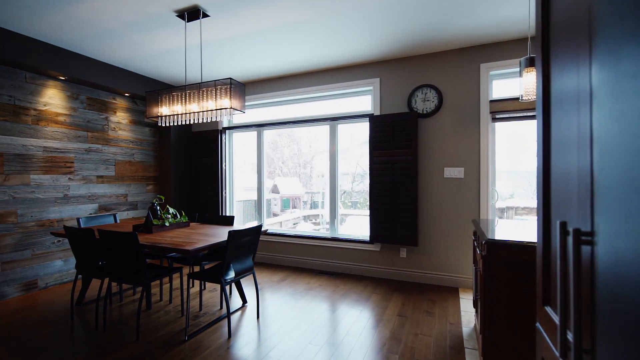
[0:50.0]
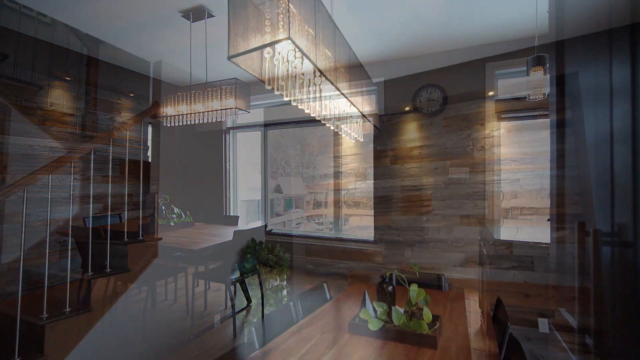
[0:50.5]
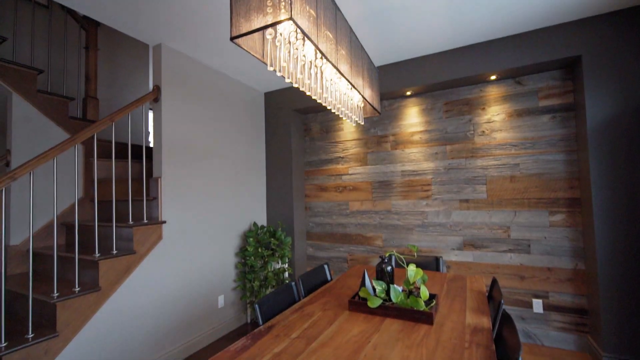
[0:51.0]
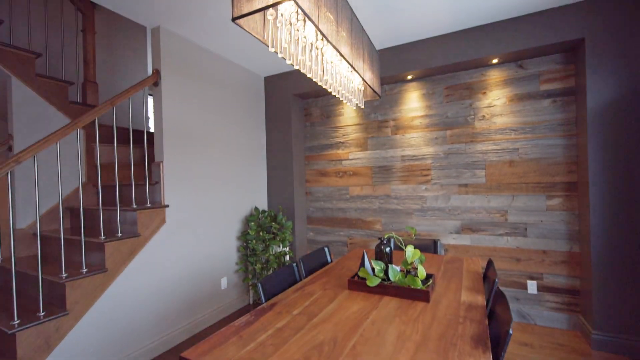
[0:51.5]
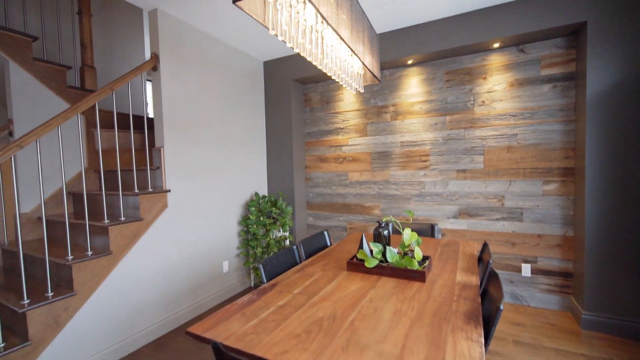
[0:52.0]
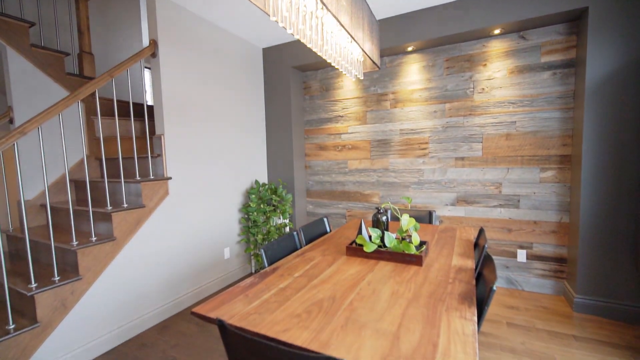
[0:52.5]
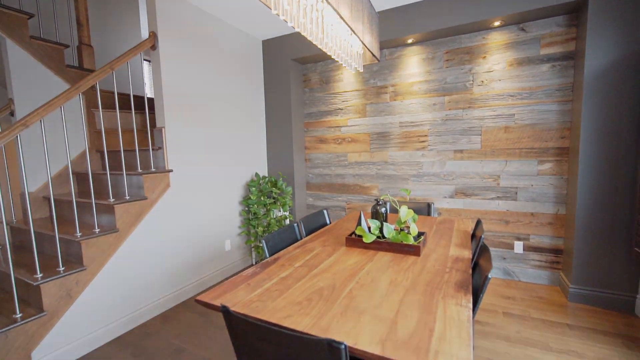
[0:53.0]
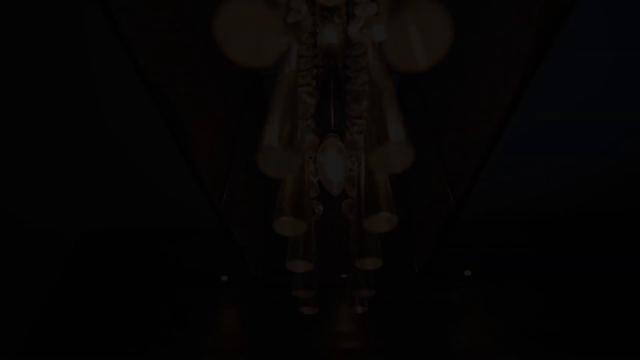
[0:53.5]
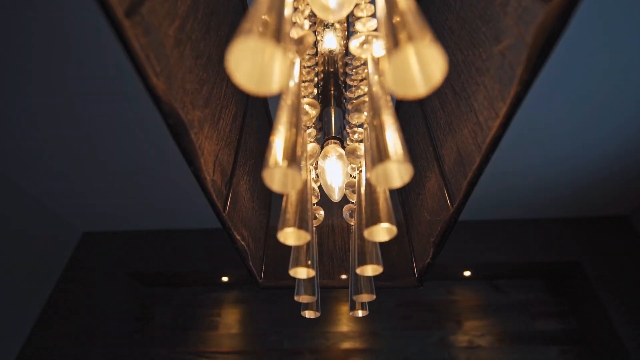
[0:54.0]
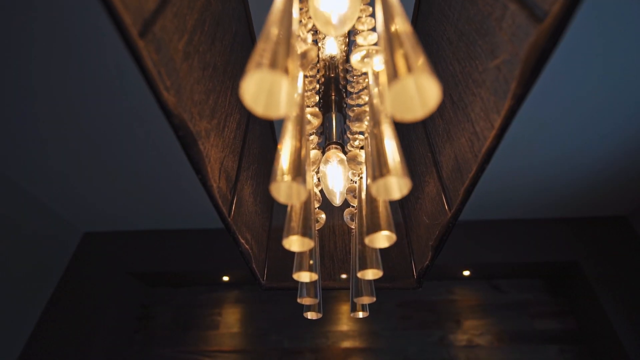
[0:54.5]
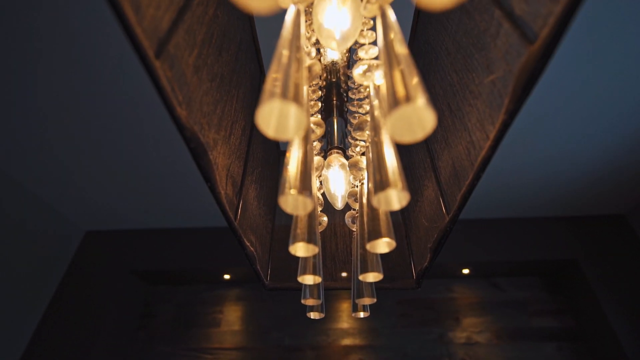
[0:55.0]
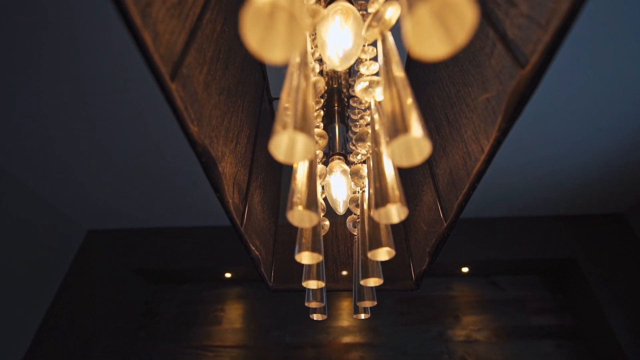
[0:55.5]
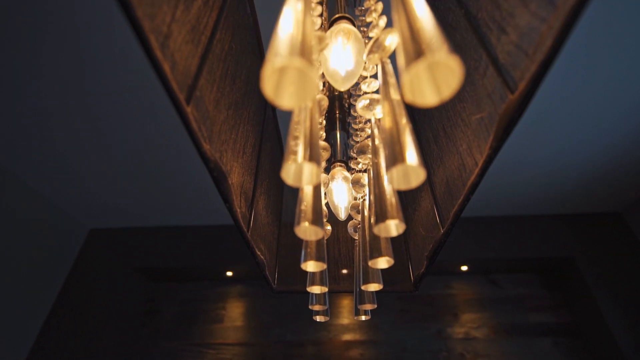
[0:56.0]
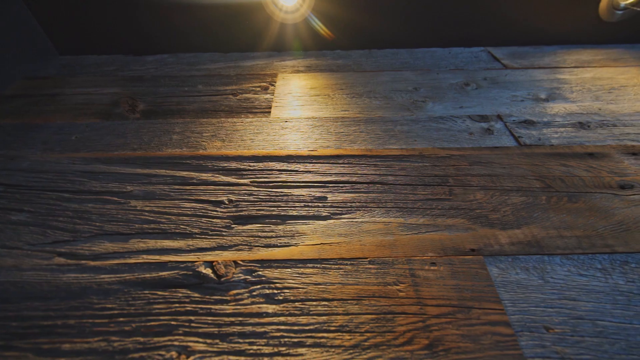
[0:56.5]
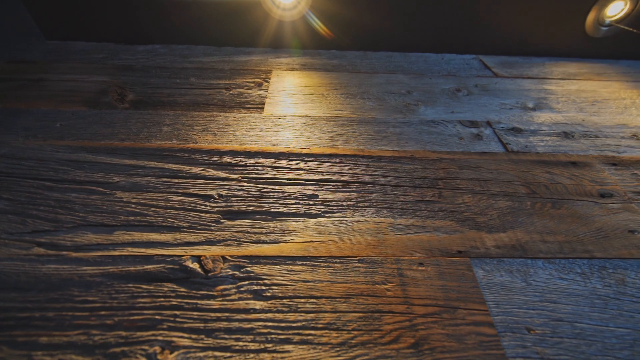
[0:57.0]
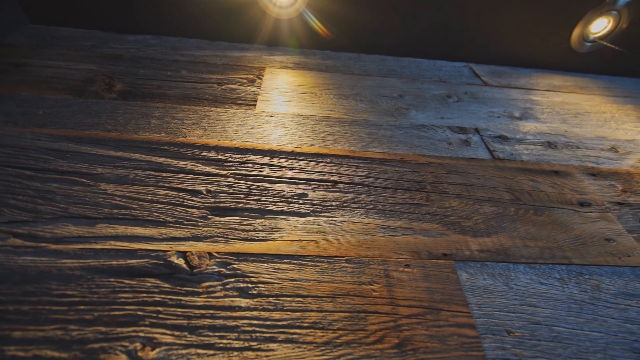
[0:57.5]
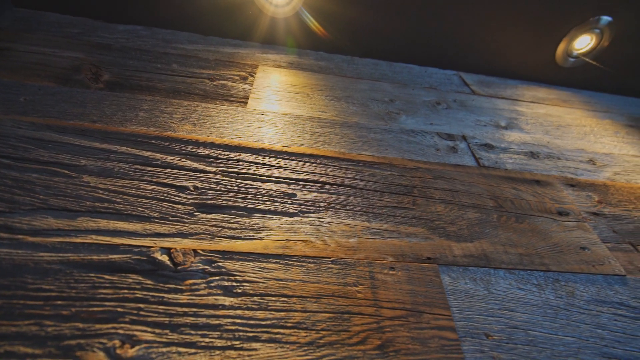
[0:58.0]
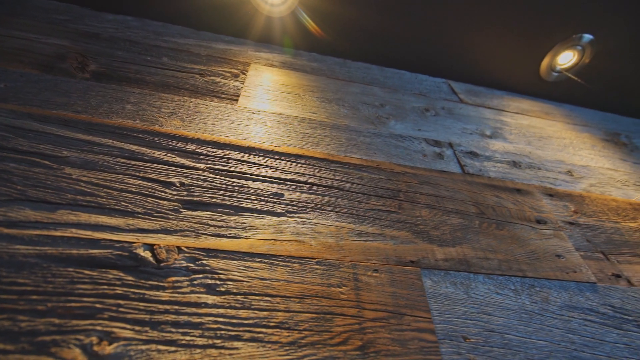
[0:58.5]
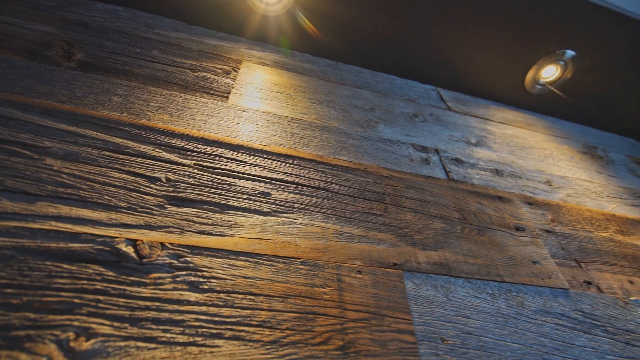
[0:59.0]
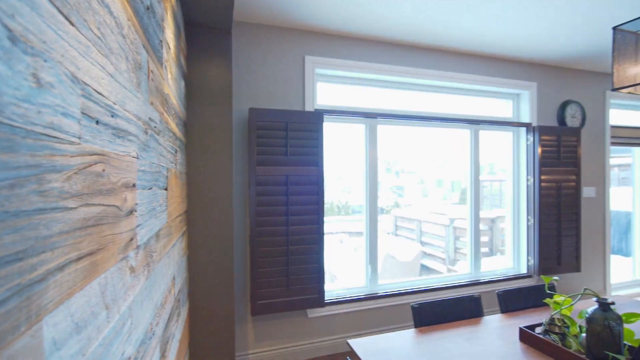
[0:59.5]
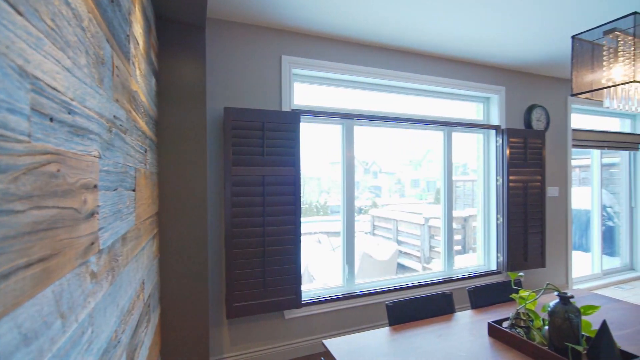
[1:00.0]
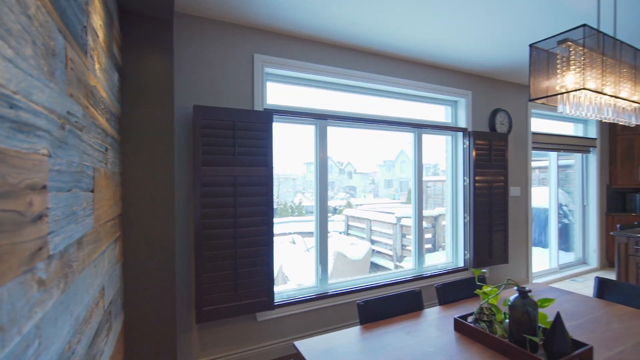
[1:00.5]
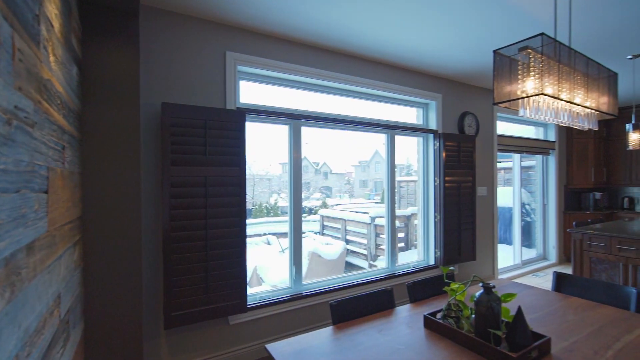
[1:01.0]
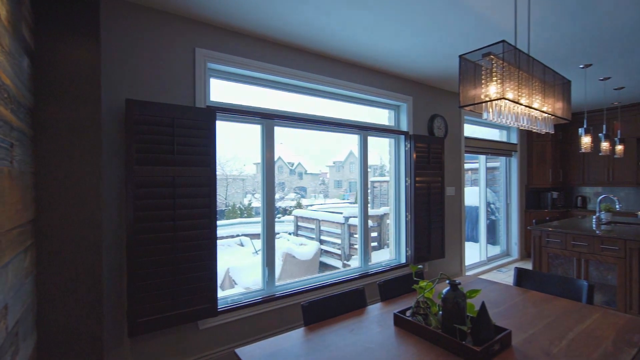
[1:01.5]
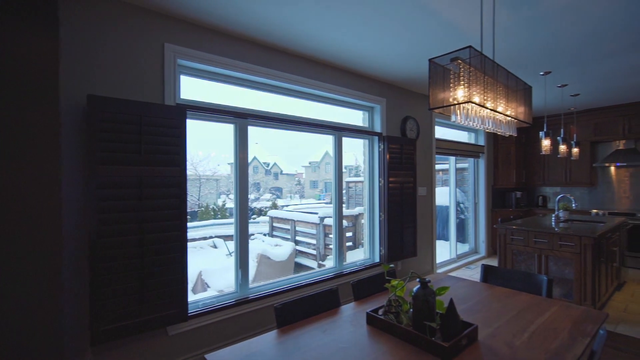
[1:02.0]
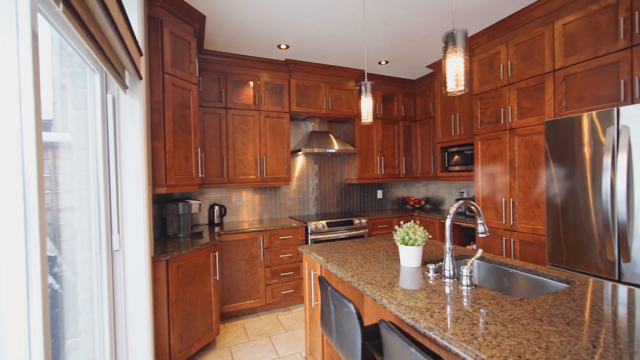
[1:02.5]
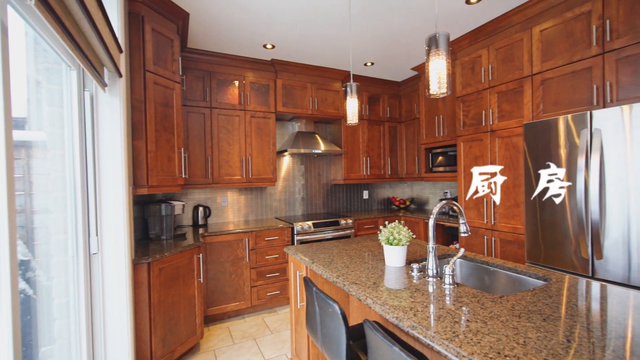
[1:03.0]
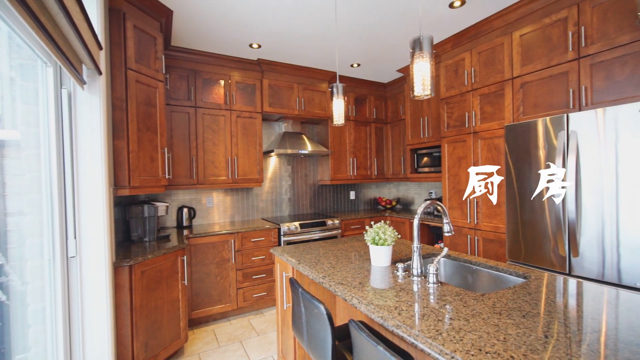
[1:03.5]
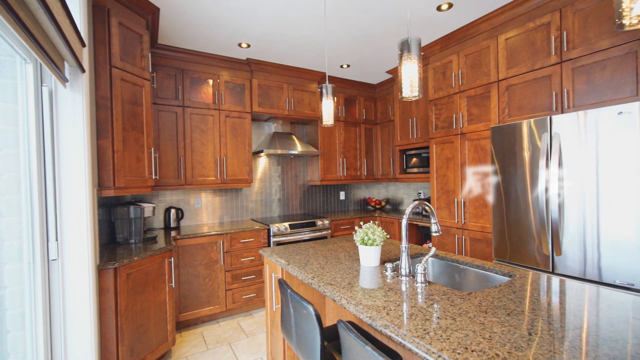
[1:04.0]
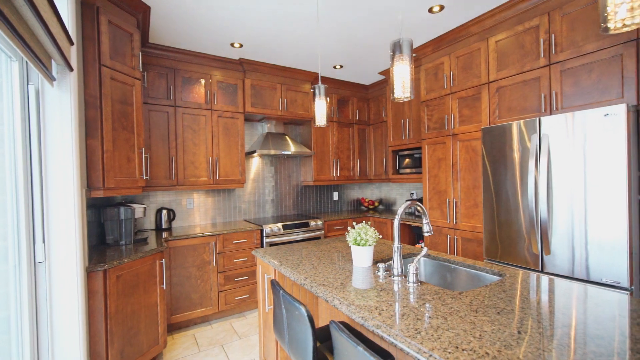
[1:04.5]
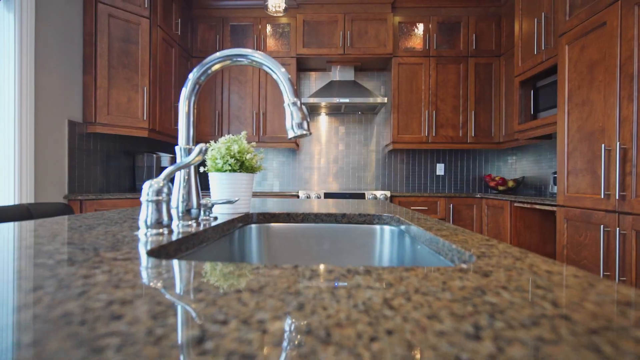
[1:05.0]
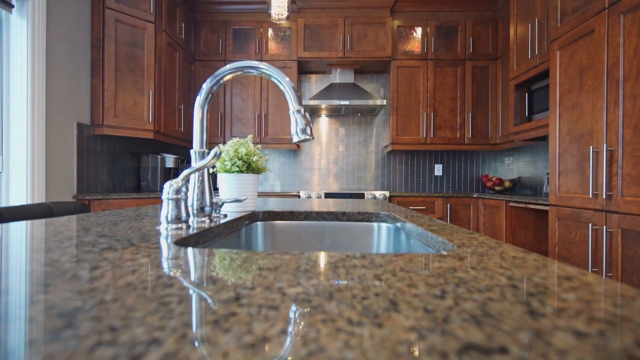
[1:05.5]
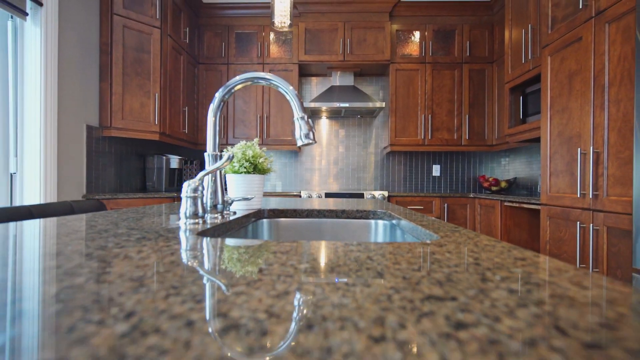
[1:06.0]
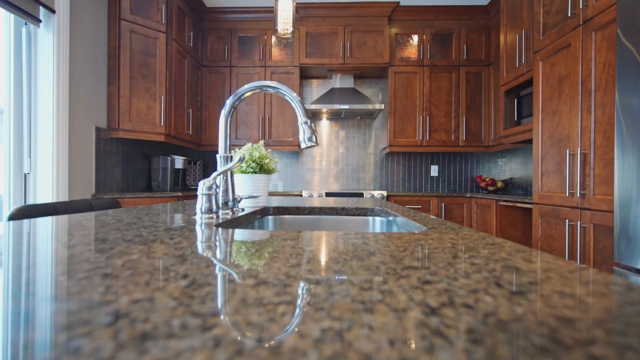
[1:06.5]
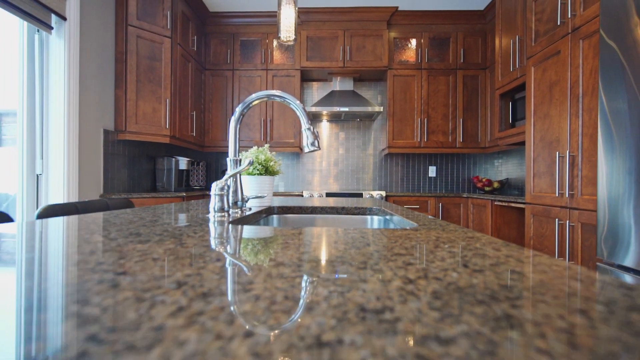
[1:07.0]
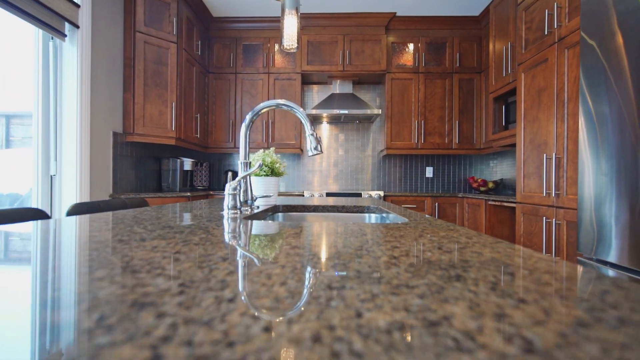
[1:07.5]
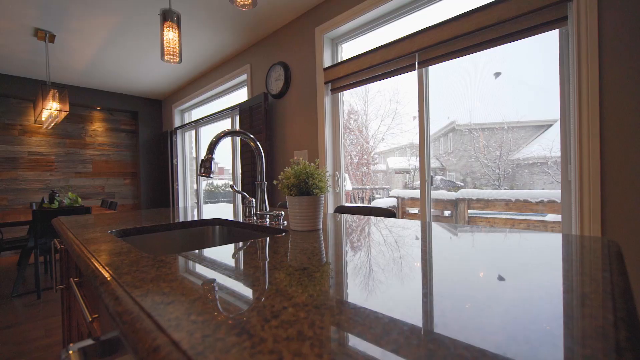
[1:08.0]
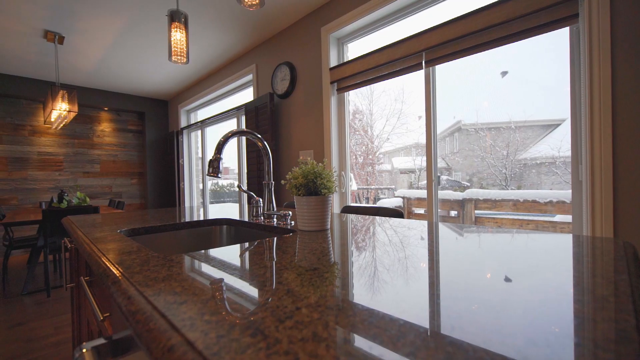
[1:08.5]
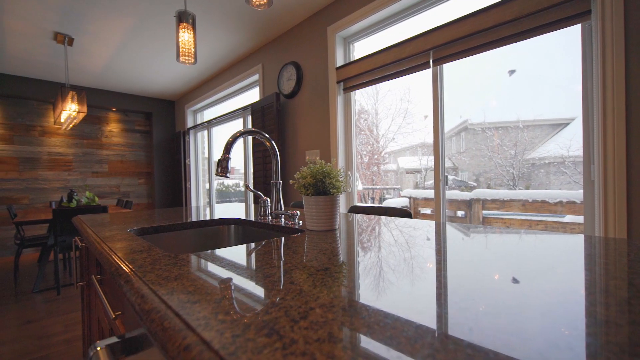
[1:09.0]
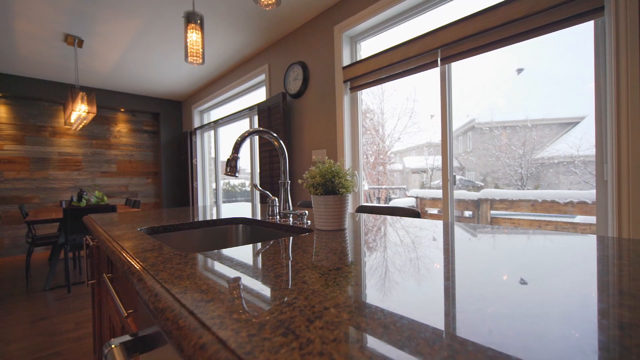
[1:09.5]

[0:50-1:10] Part of a room is shown, apparently part of a dining room, with a staircase on the left-hand side and a wooden table with chairs on the right-hand side. The camera quickly morphs and changes, pointing upward at a chandelier that looks like it has a lot of lights. It then points upward at a wall toward the ceiling, showing two light fixtures; the ceiling appears to be very dark gray. Next is the kitchen, with brown cabinets, at least 15 of them. A silver fridge is on the right-hand side, and there is a kitchen island with a faucet and a tannish light brown countertop. The camera is at an angle as if placed on the countertop and backs out slowly, showing the back end of the kitchen where the cabinets are. The camera angle then changes to the opposite side, showing the windows; outside it is snowy and some neighbors' houses are visible. The camera moves slightly to the left.